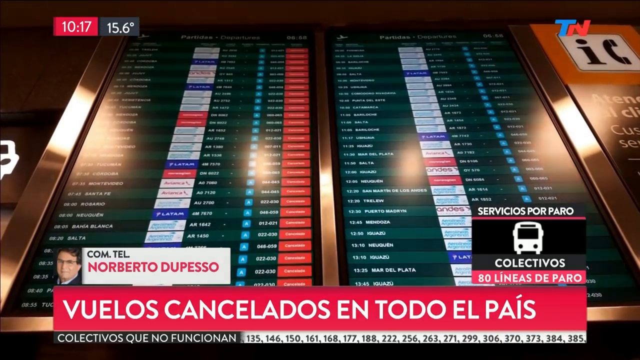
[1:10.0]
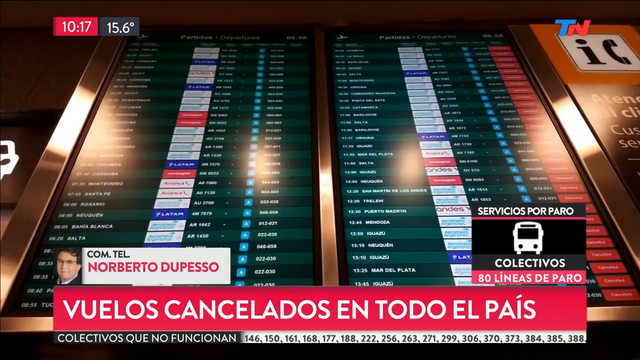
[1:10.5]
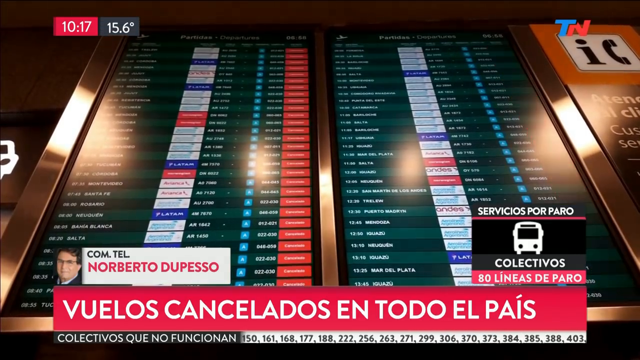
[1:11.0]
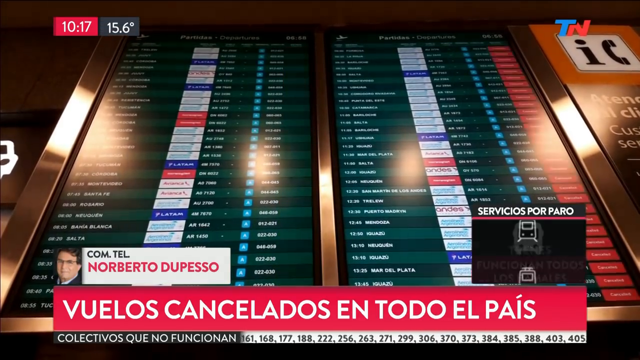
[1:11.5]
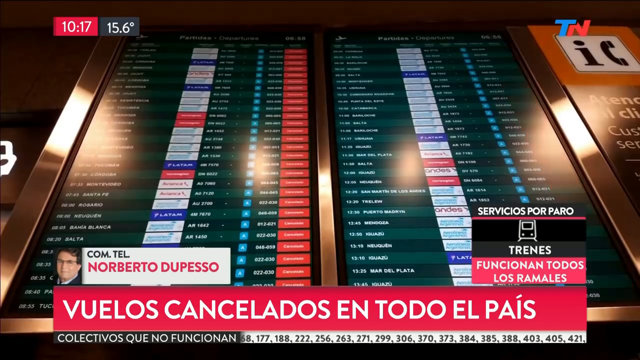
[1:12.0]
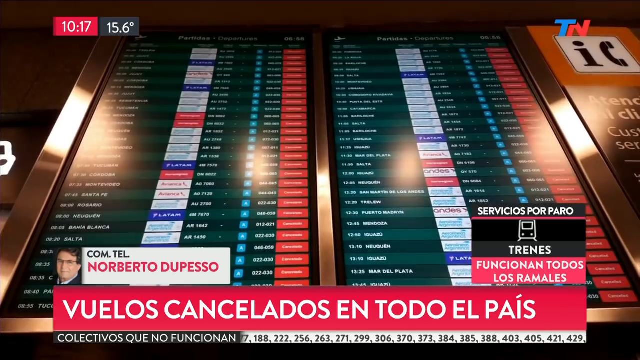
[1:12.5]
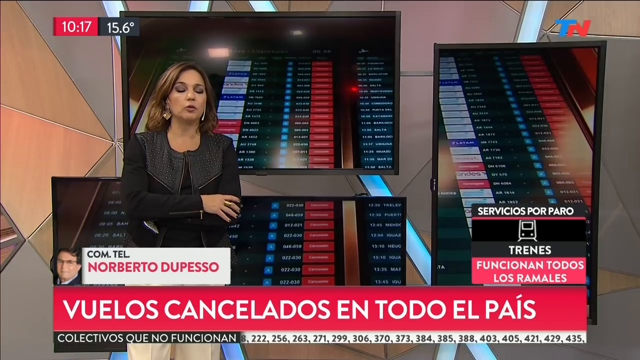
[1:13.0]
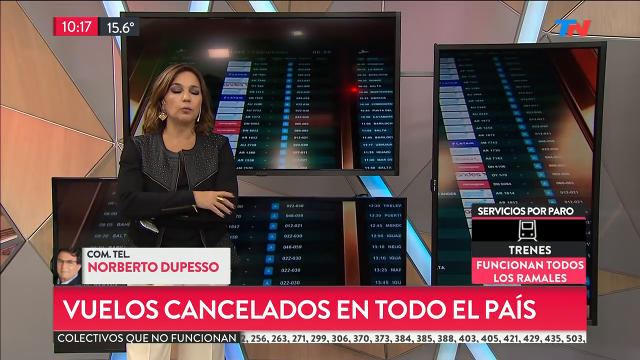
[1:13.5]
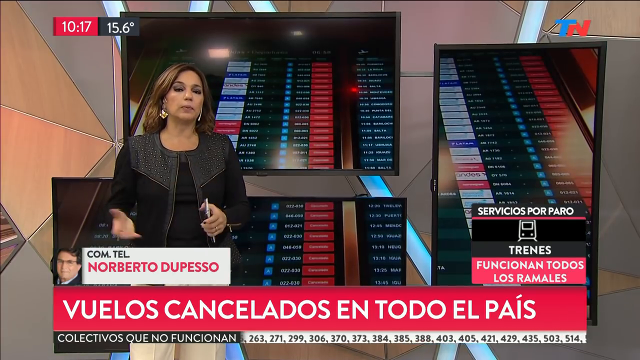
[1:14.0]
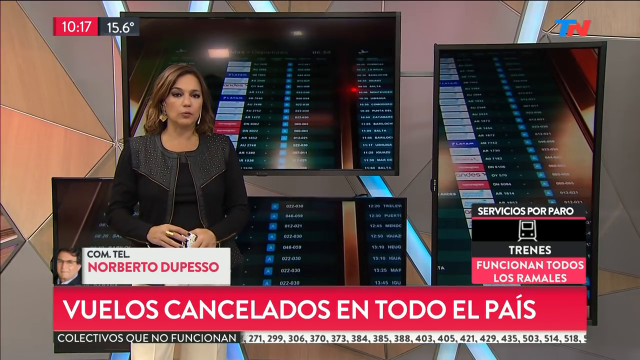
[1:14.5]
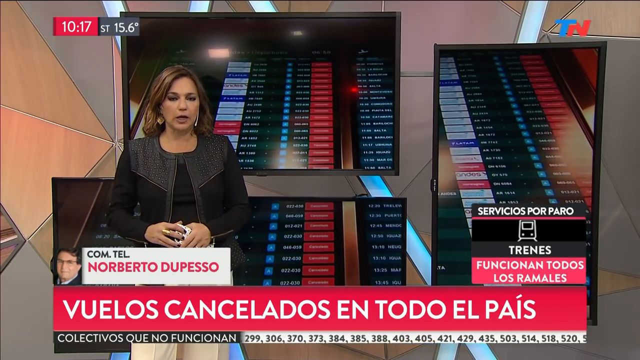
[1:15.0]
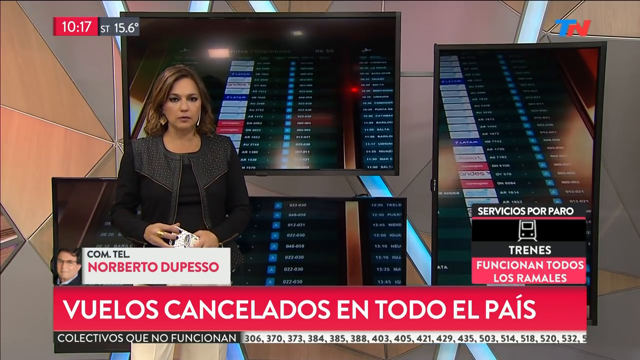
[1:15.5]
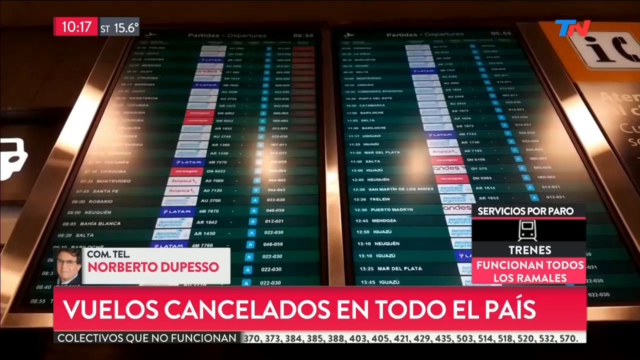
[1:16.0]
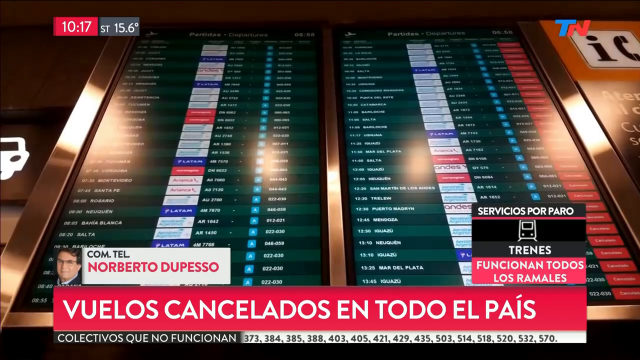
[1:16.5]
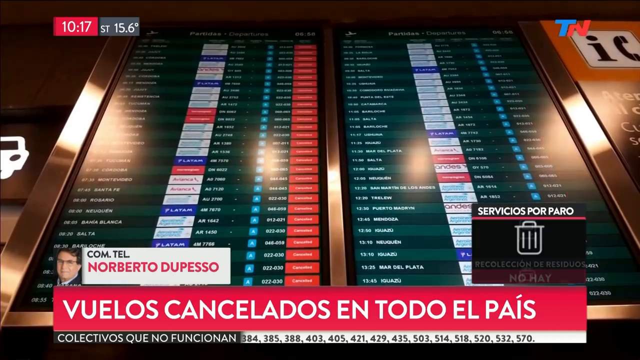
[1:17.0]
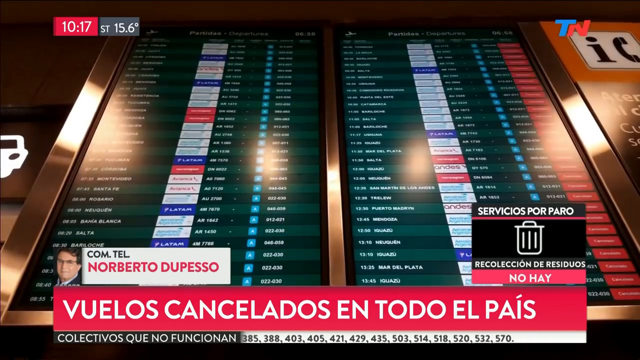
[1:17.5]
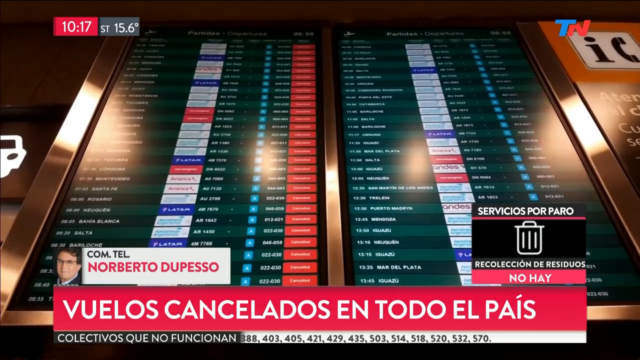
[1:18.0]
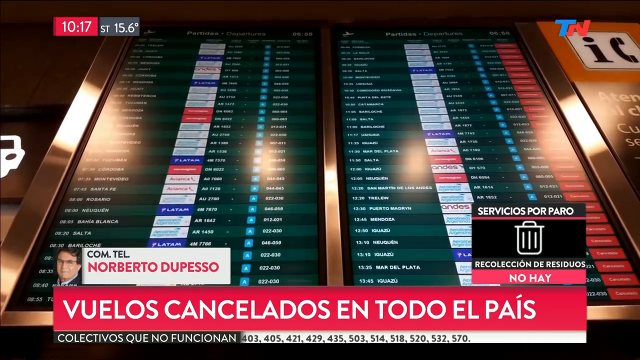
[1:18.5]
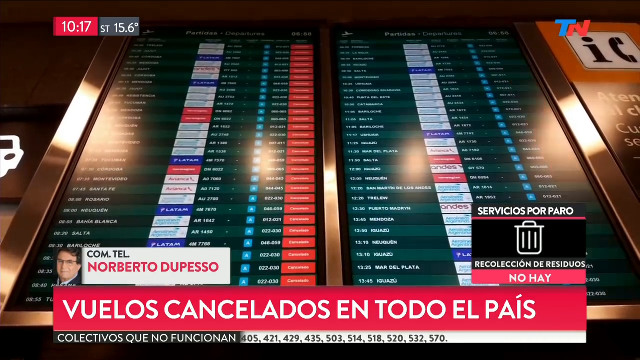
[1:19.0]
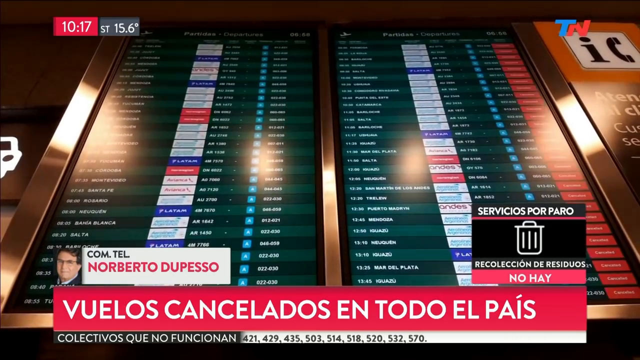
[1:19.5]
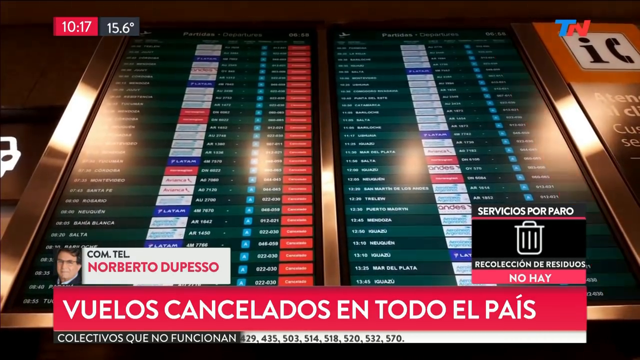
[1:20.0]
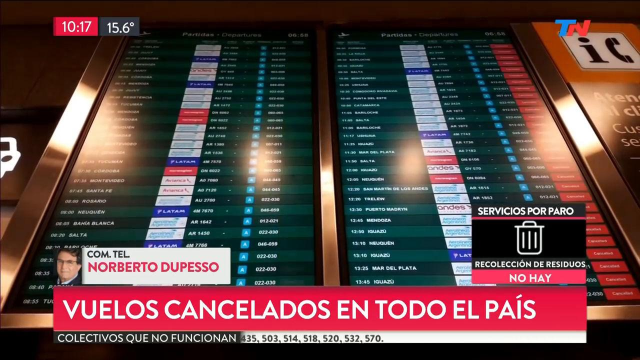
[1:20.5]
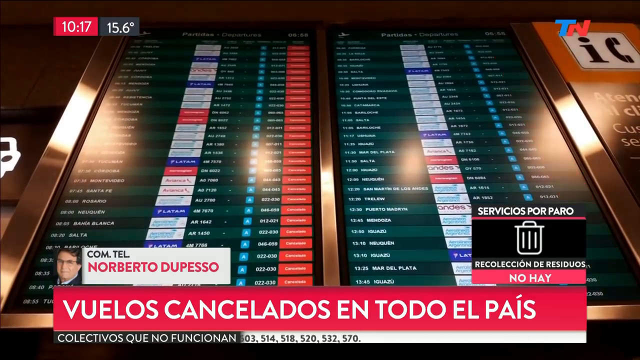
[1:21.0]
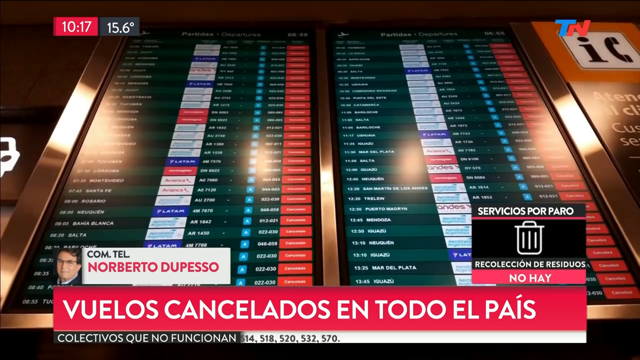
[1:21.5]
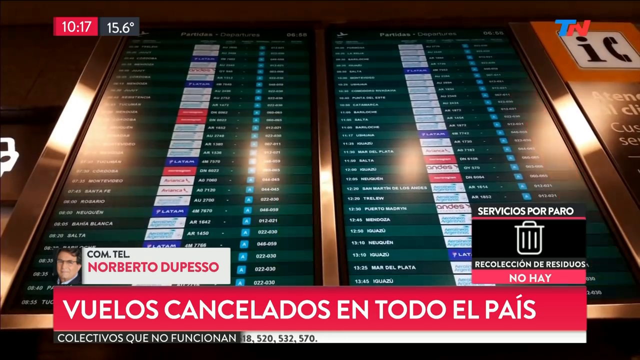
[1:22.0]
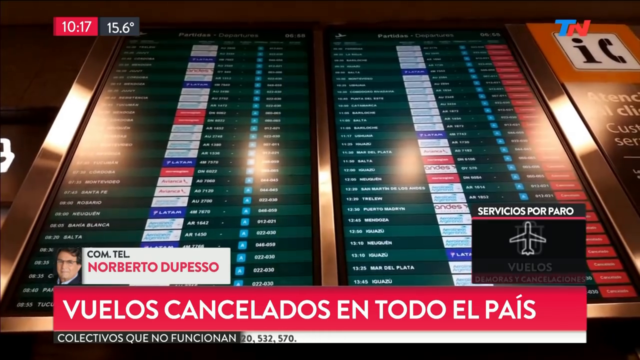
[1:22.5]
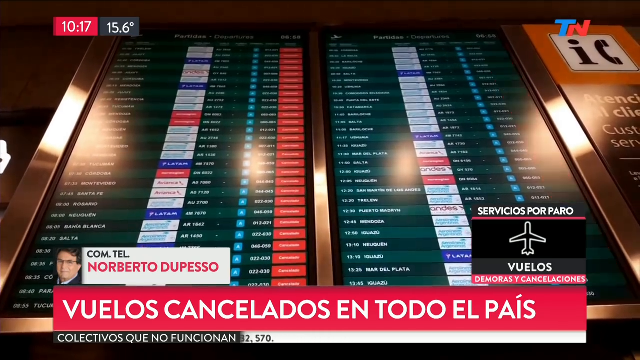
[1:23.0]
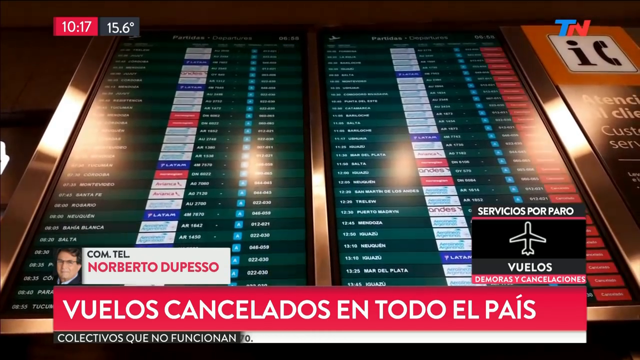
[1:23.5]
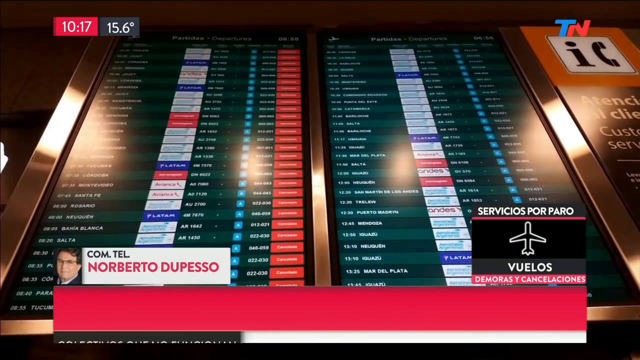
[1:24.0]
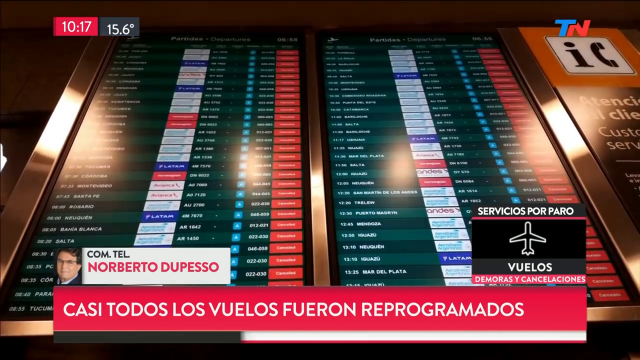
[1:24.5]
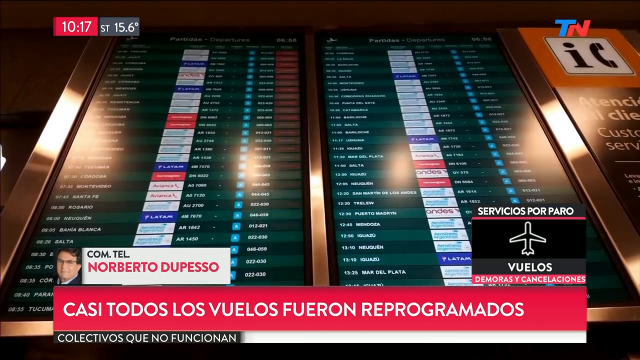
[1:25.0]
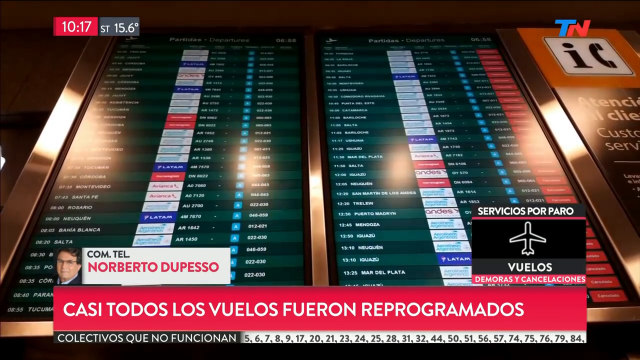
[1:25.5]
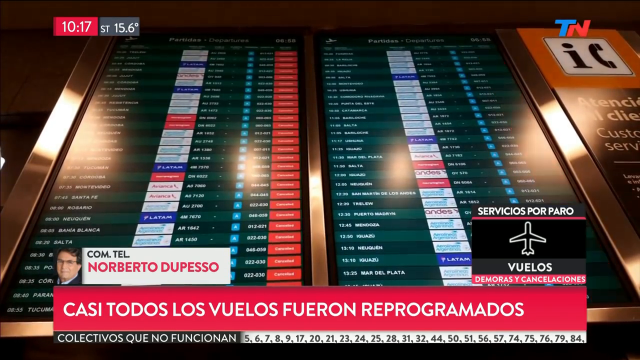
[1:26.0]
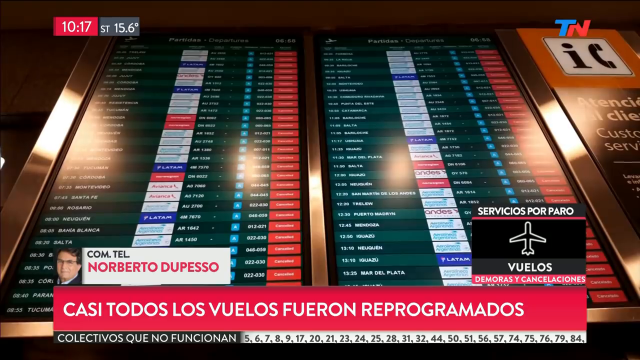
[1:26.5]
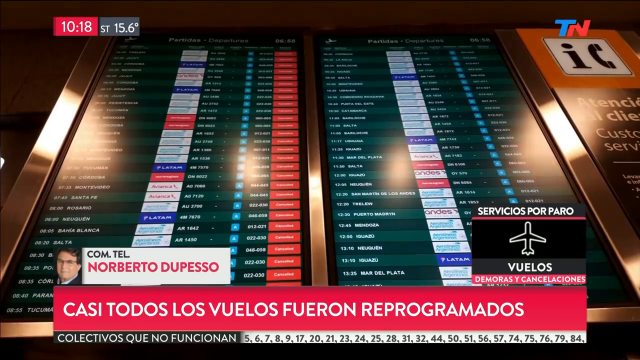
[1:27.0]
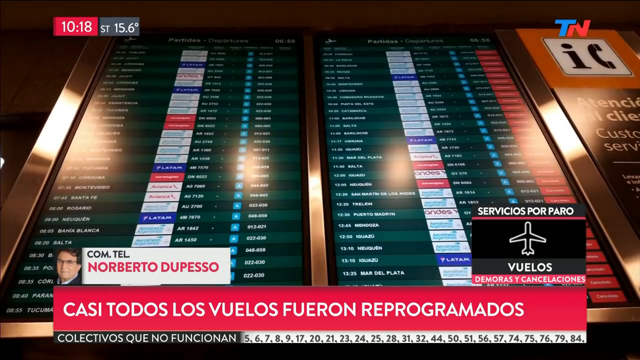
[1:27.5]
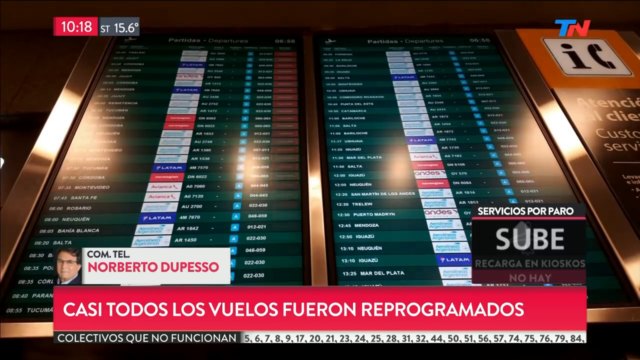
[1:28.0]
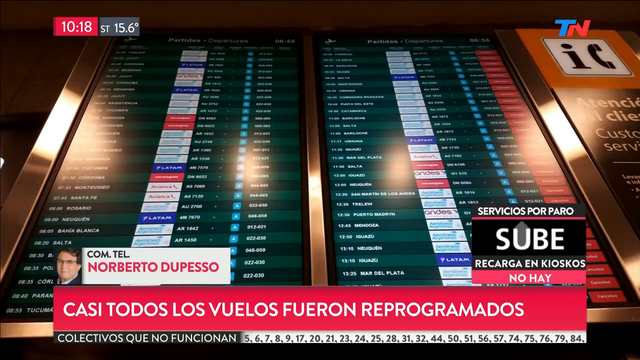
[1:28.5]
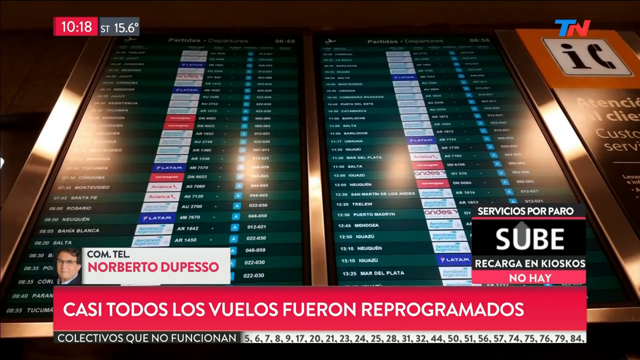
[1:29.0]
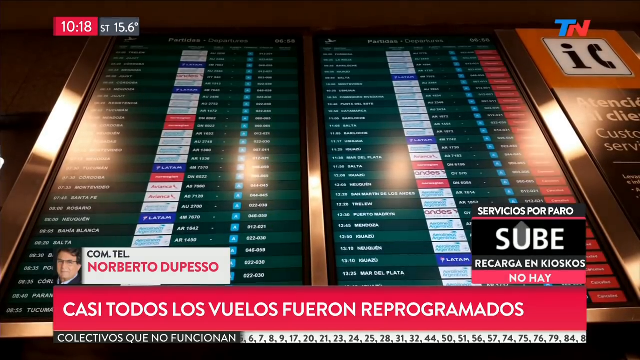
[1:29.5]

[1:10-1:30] The view stays focused on the two big screens, which show a red light on the side and display destinations. At the top, a time is shown that keeps changing. A woman faces the camera as she talks. On the left side, a portrait shows the different services offered by bus, train and aeroplane. There is also an entrance.